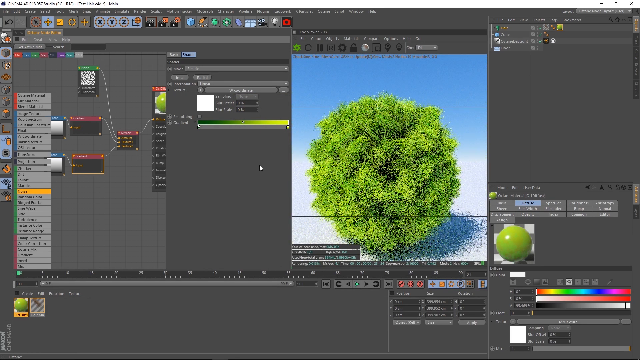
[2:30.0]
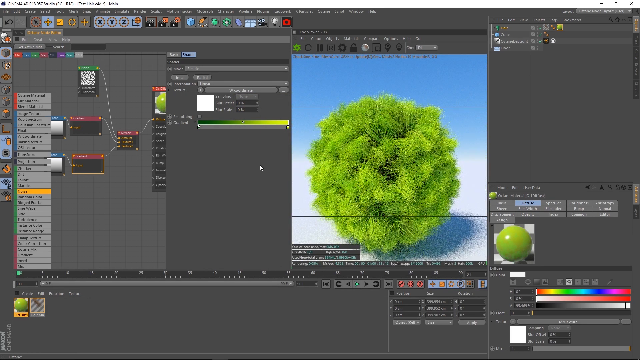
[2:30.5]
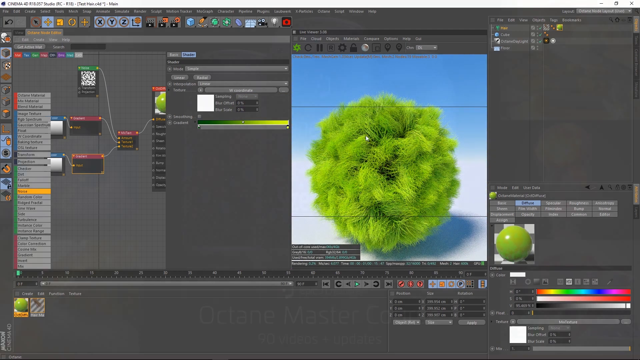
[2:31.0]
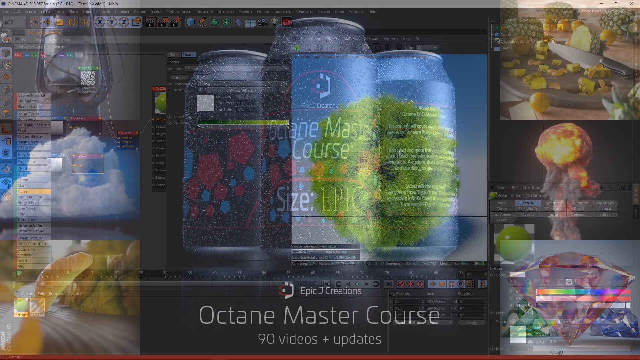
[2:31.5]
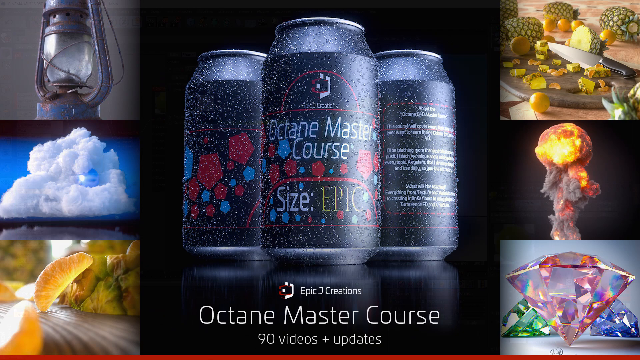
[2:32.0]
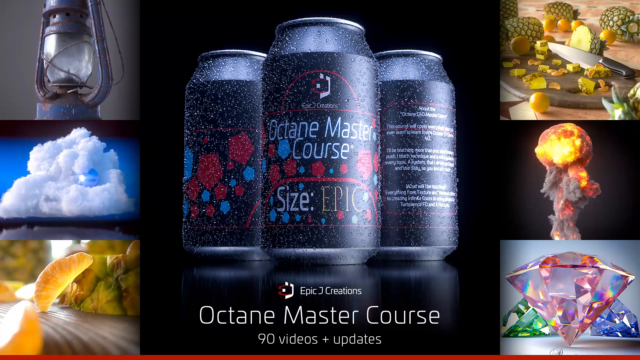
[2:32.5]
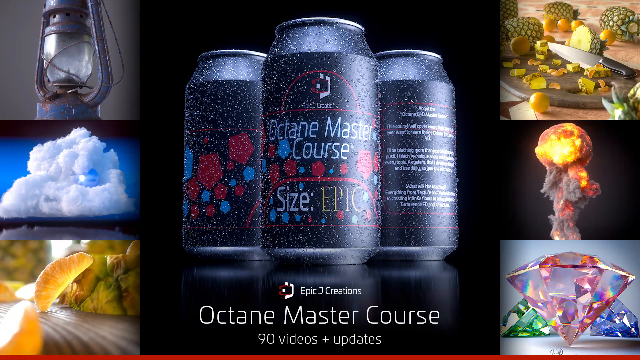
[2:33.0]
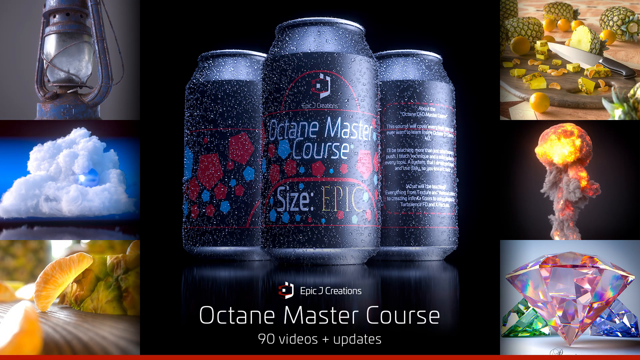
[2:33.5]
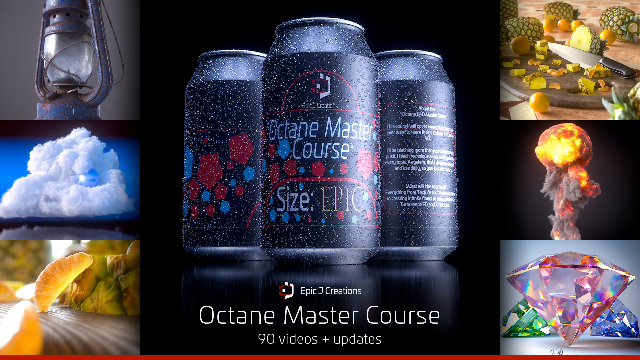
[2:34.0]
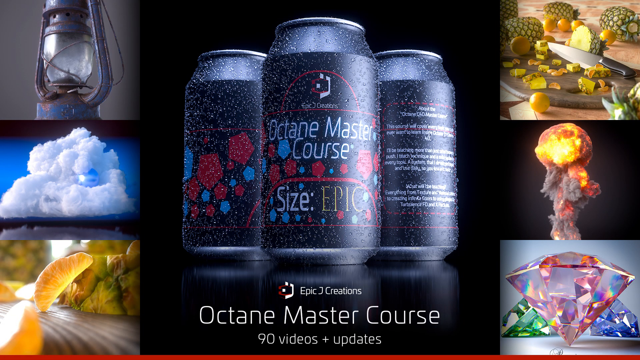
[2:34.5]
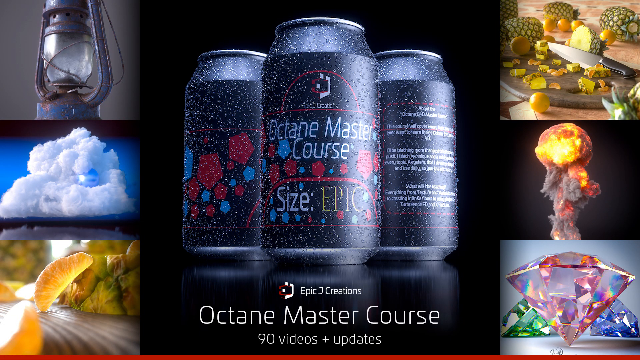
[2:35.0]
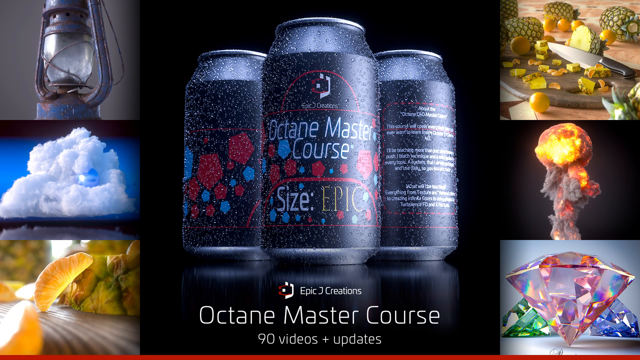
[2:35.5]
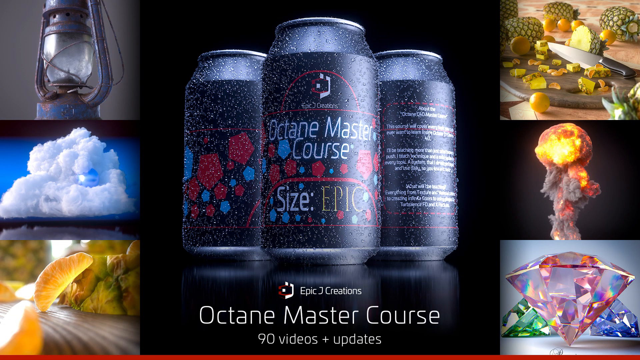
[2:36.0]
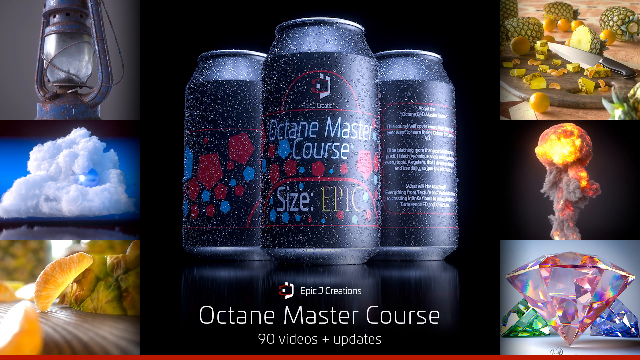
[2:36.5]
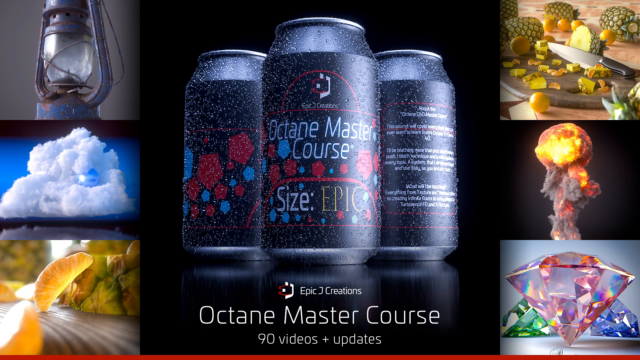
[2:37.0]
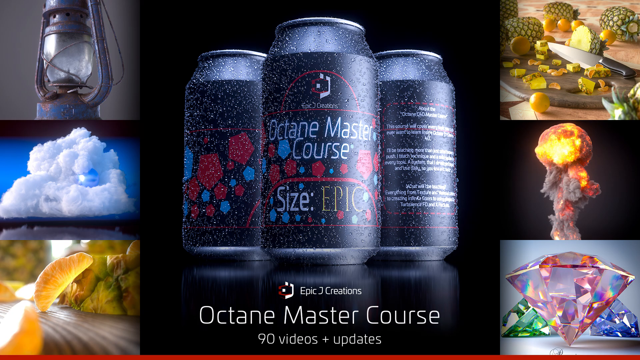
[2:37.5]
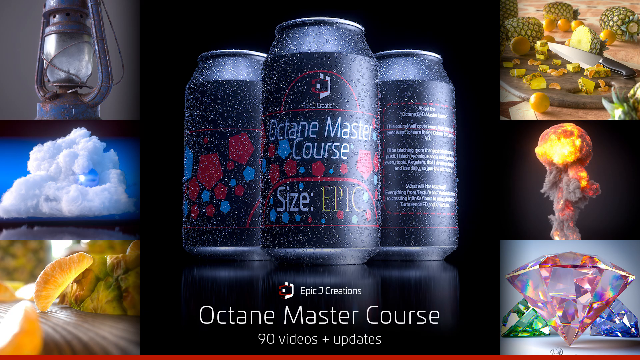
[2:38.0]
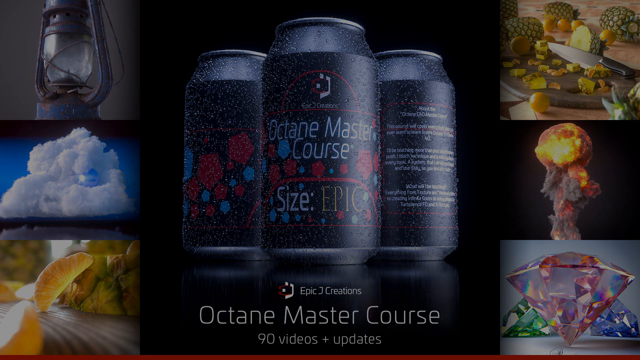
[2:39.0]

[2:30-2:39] The bright green ball is on the screen, and its color gets slightly brighter as it renders. The screen then fades to the Octane Master Course front page once again. Three soda cans are in the center, with the text "Octane Master Course" on top and the words "Size Epic" underneath. The black cans carry a design of red and blue hexagons underneath the writing. On the left and right sides are a bunch of different renders, including a lamp, clouds, a tangerine, a pineapple, an explosion, and diamonds. This stays on the screen until the video fades away.